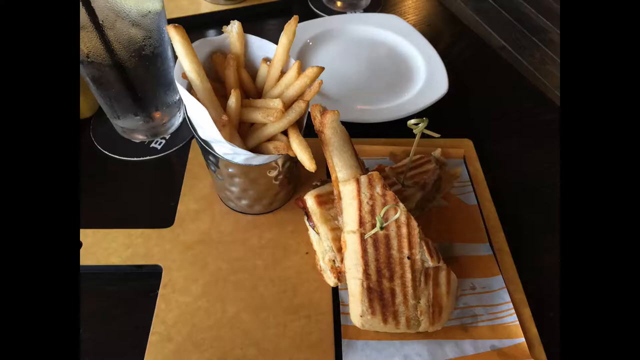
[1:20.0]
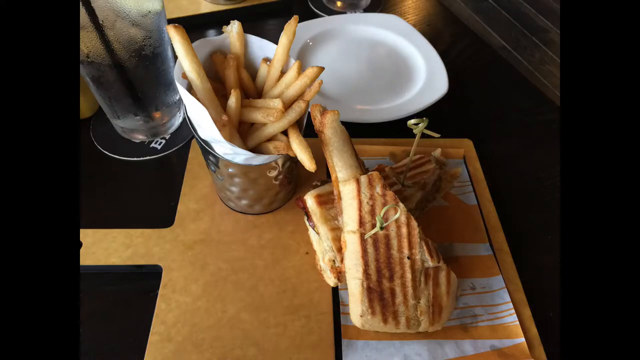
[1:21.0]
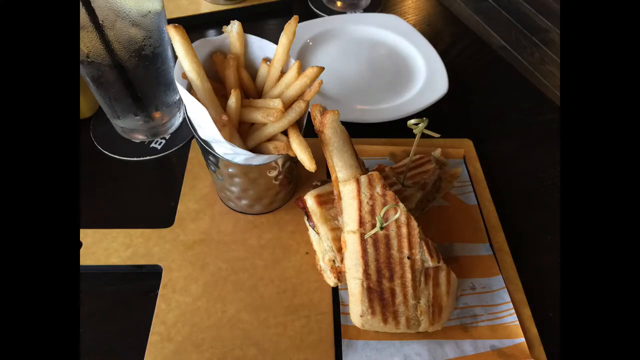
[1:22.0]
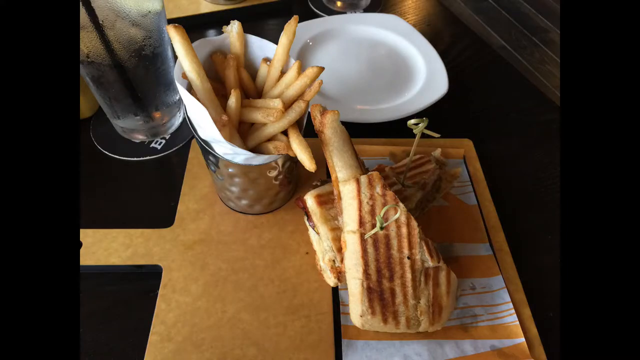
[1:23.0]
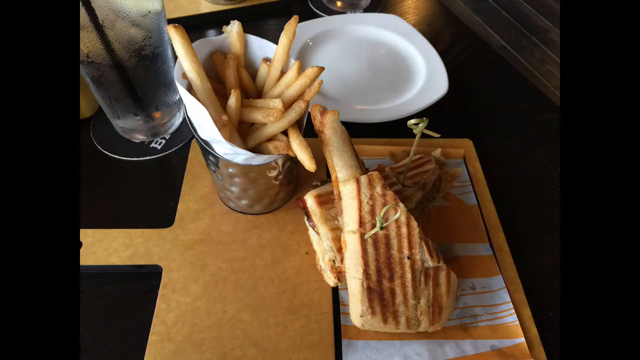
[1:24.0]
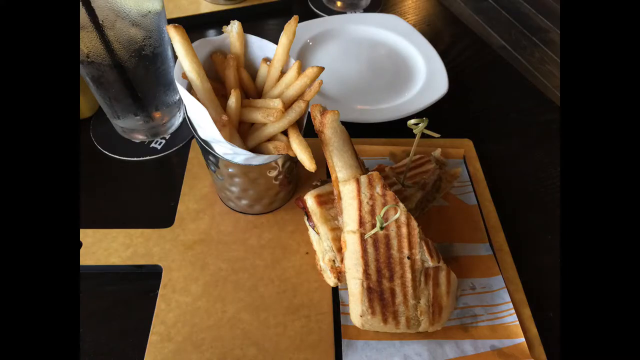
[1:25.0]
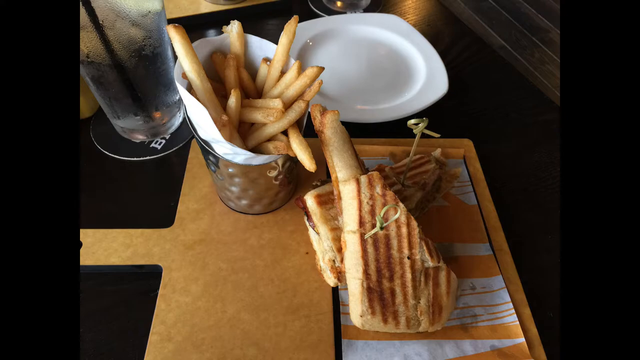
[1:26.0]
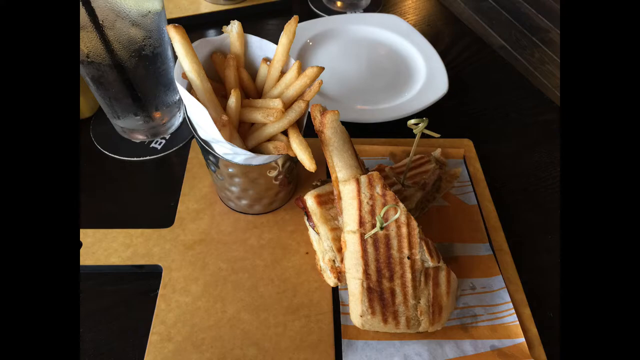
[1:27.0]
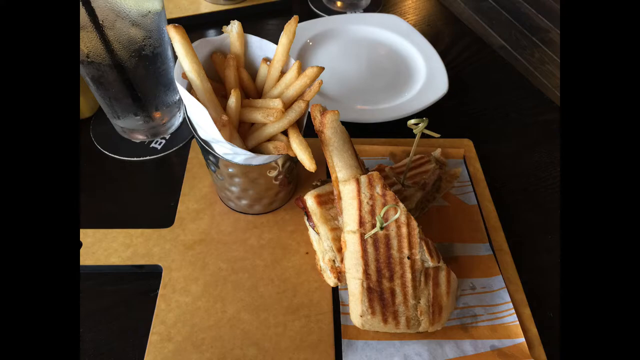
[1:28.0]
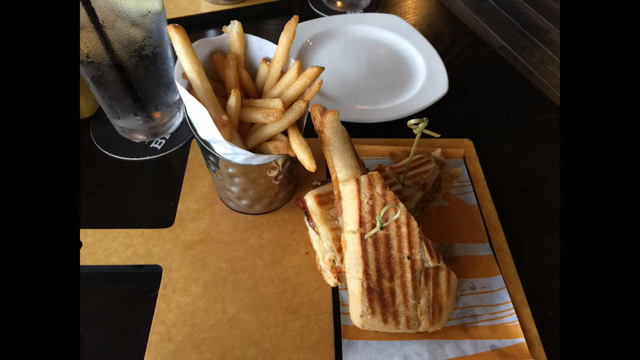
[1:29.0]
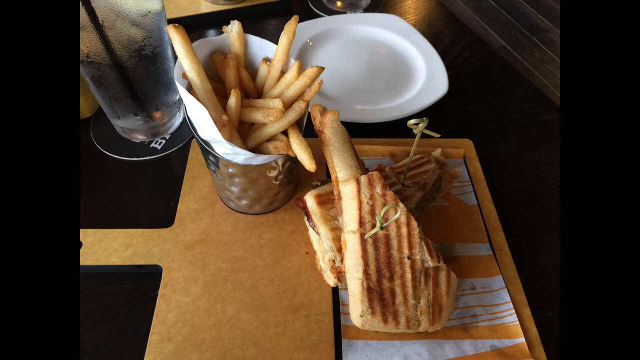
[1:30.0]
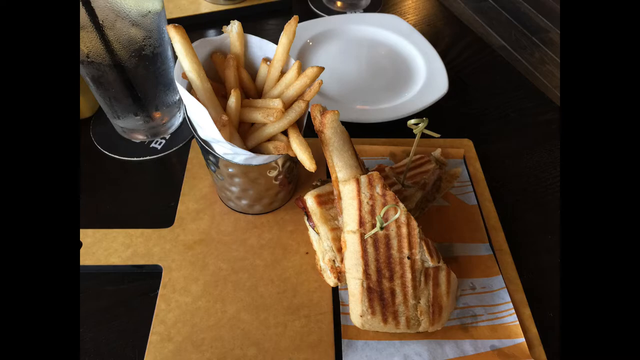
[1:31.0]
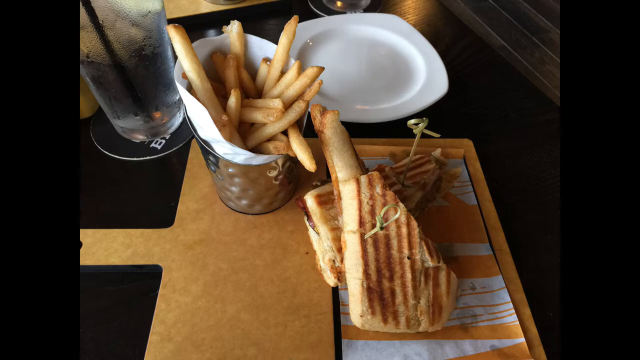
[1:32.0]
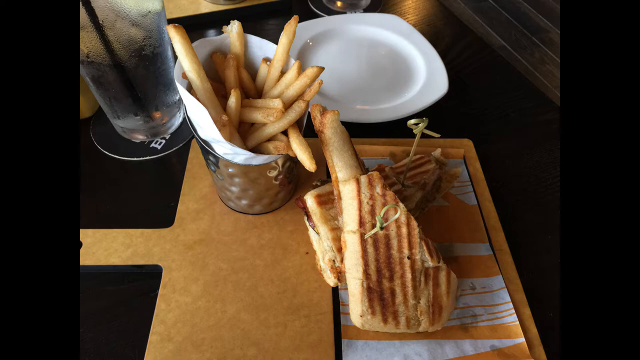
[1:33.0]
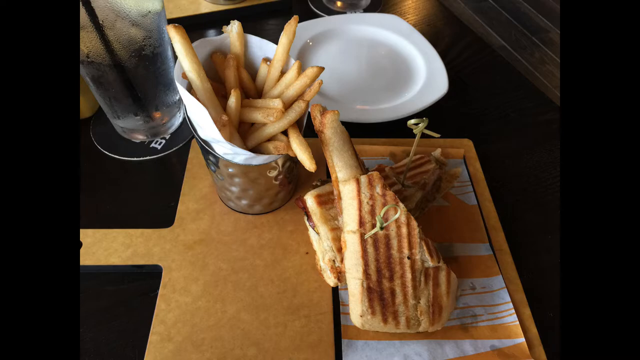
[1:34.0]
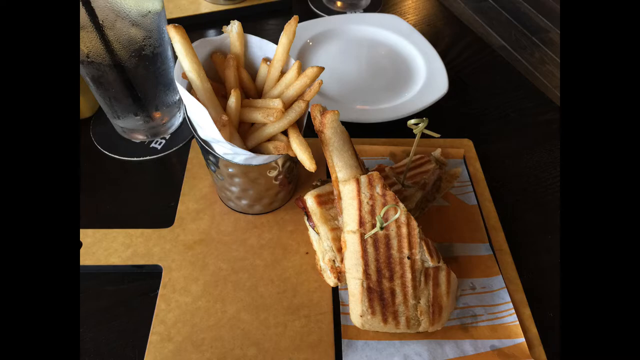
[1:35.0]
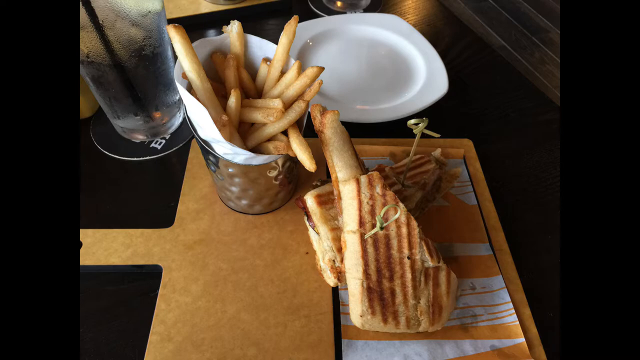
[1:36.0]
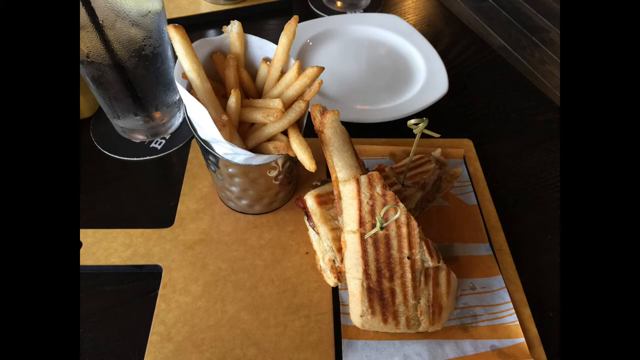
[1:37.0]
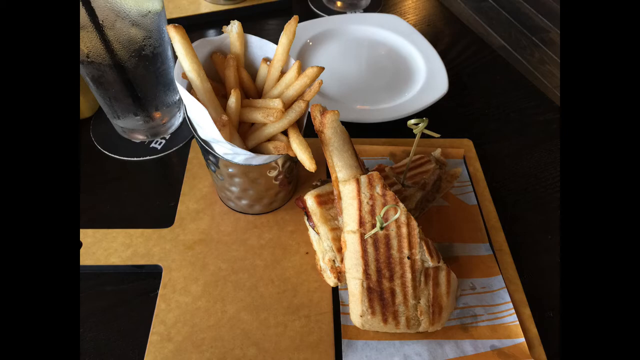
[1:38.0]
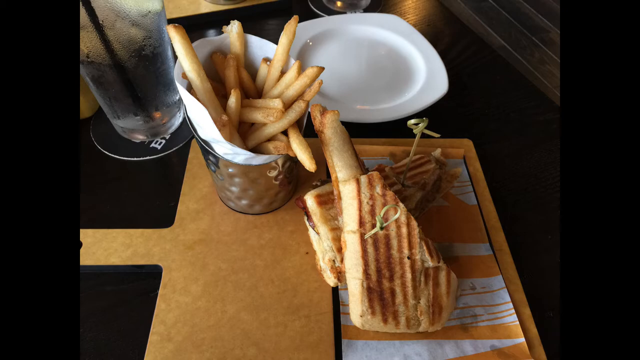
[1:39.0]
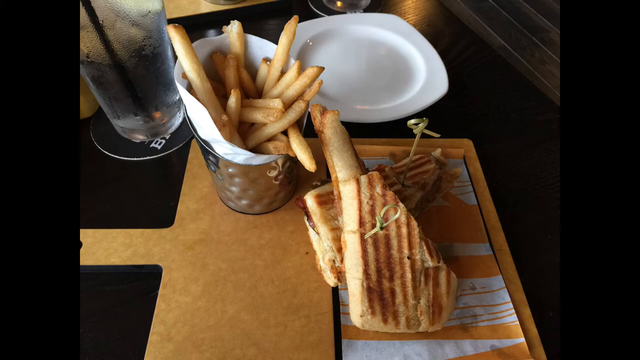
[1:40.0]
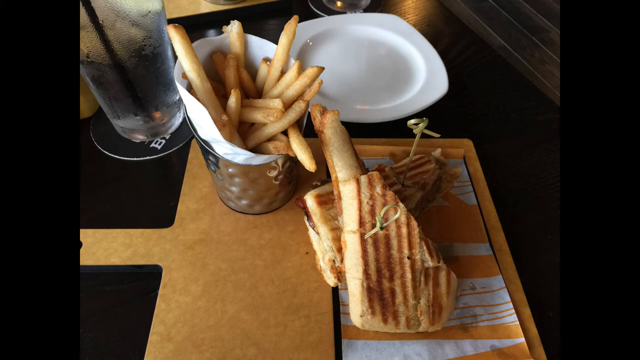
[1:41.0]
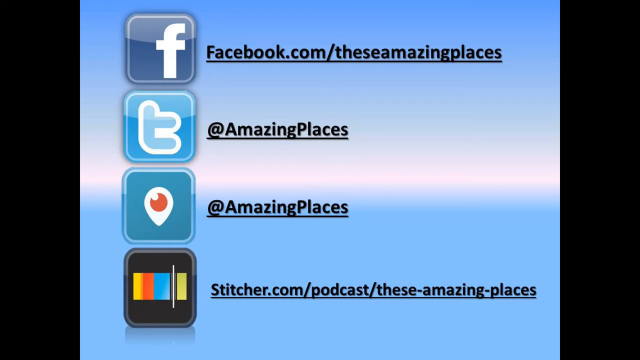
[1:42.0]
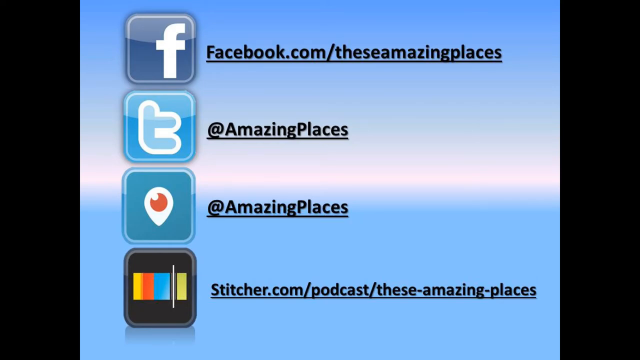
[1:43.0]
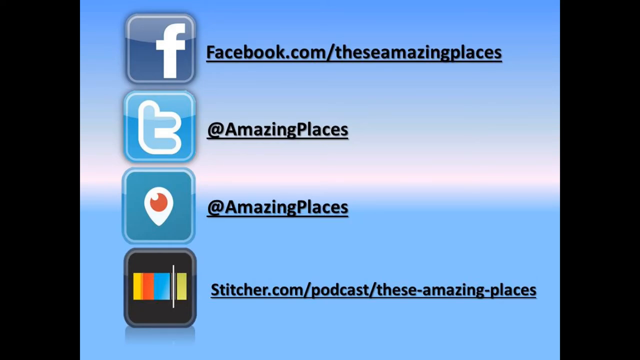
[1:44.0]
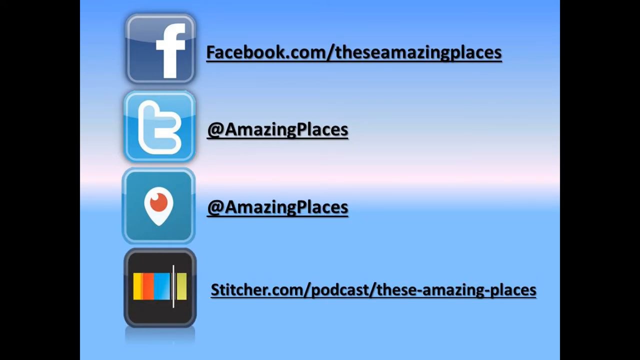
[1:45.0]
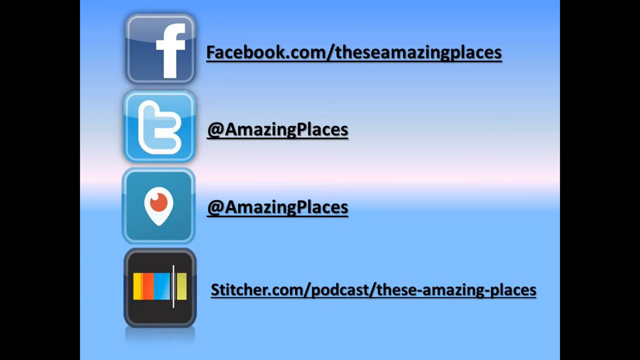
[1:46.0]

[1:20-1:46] Letterboxing appears on the left and right sides, about 15% each. Just left of and above center is a silver bucket with its handle angled toward the upper left. A piece of paper in the bucket is higher on the same side as the handle, and in the paper is a bunch of fries. A triangular panini half points toward the upper left, and another panini half is on top of that panini, with half of it on the other panini and half on the table, pointing toward the lower left. Right above the sandwich and to the upper right of the bucket of fries is a white plate. The table is black with a yellow or yellowy-orange plus in the center. To the upper left is what looks like a plastic cup filled about halfway with water, with a black straw in it, on a black coaster that may say "Bills"; only the B and the I are visible, in white letters outlined in red and blue.